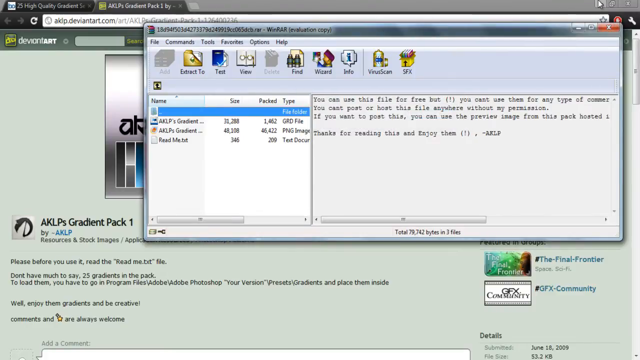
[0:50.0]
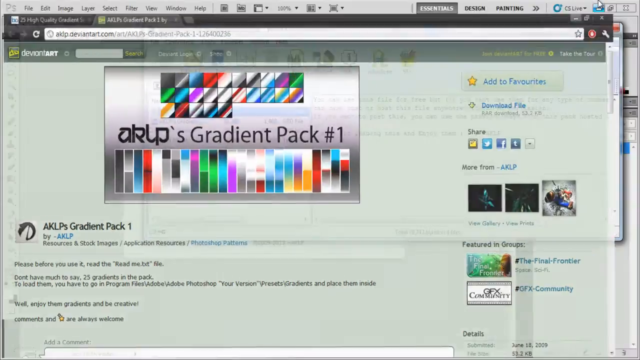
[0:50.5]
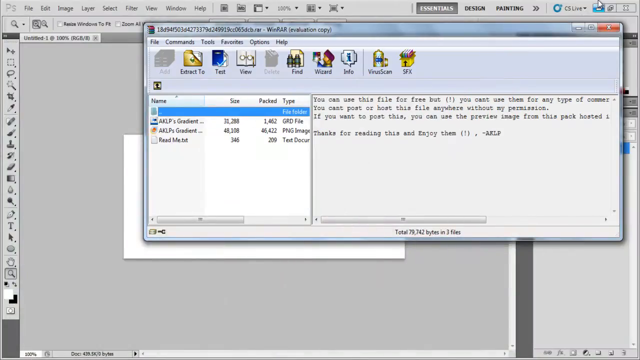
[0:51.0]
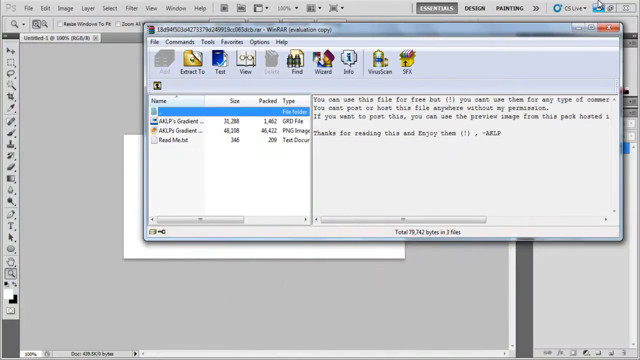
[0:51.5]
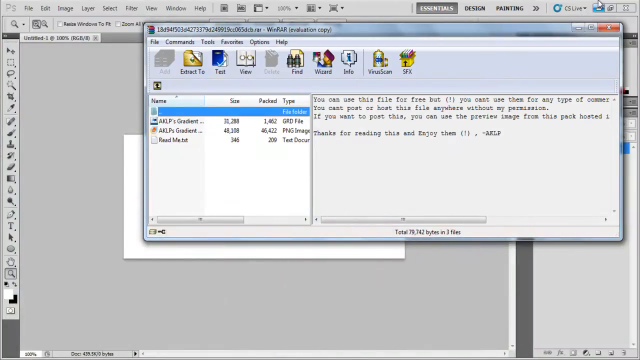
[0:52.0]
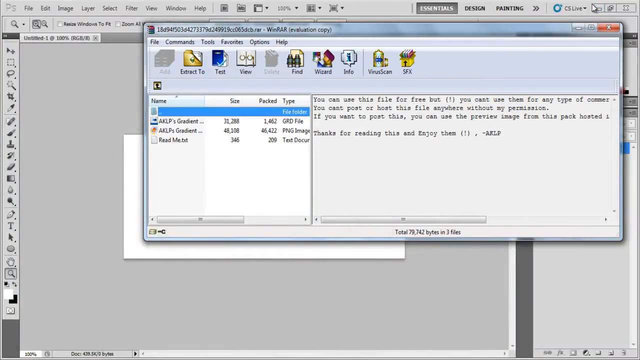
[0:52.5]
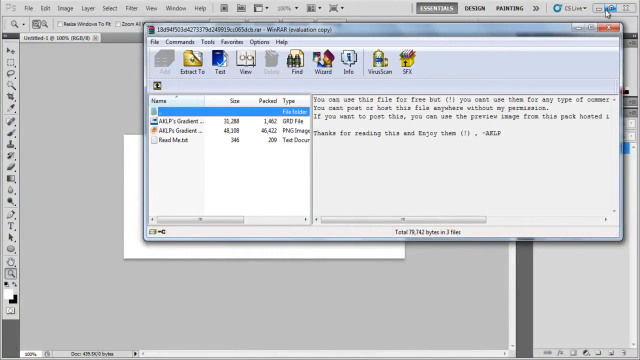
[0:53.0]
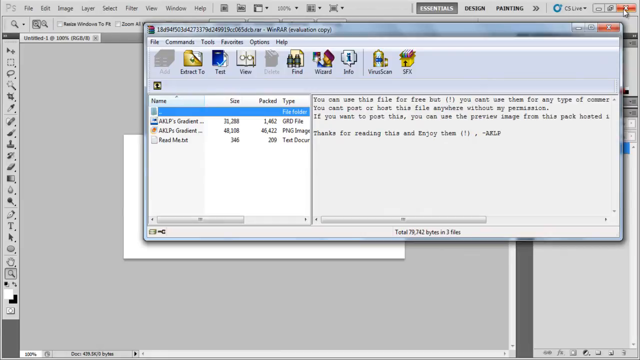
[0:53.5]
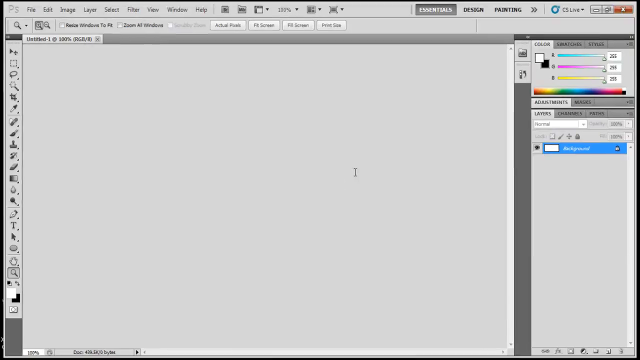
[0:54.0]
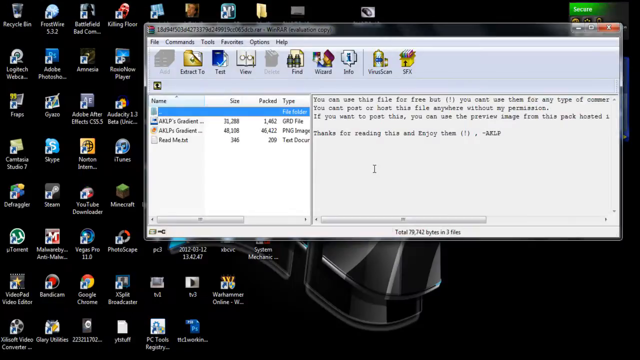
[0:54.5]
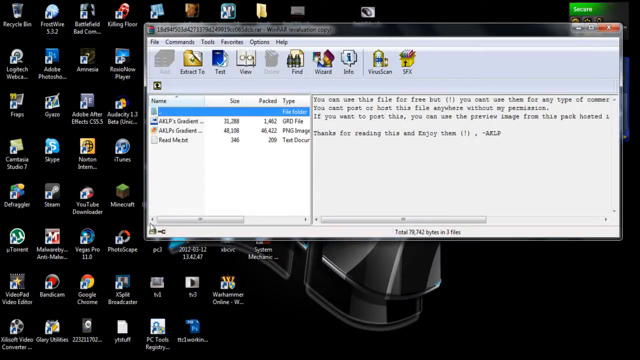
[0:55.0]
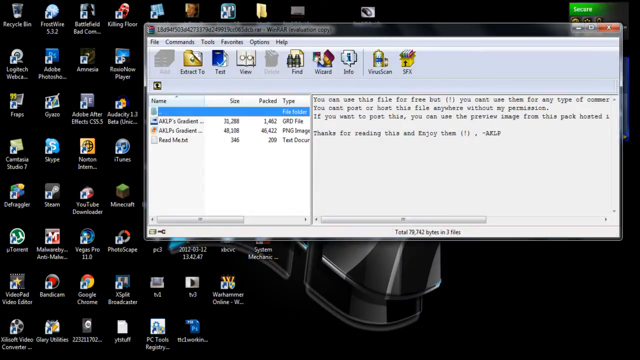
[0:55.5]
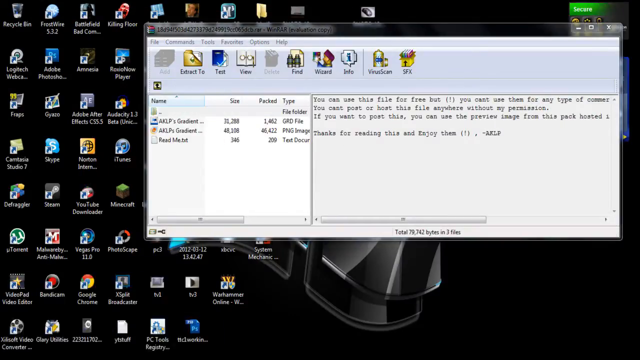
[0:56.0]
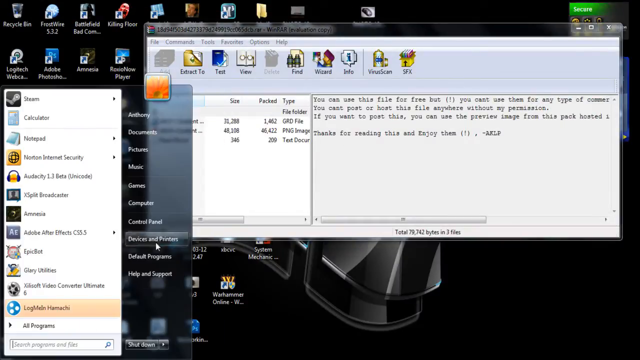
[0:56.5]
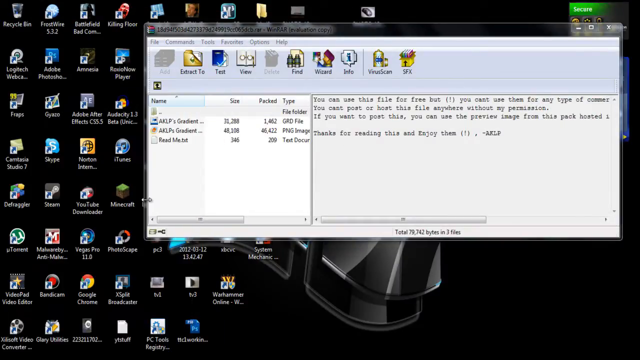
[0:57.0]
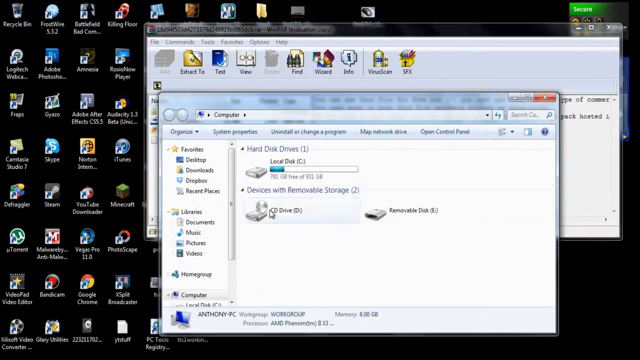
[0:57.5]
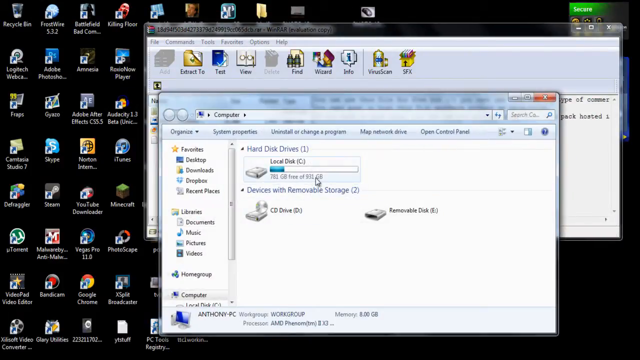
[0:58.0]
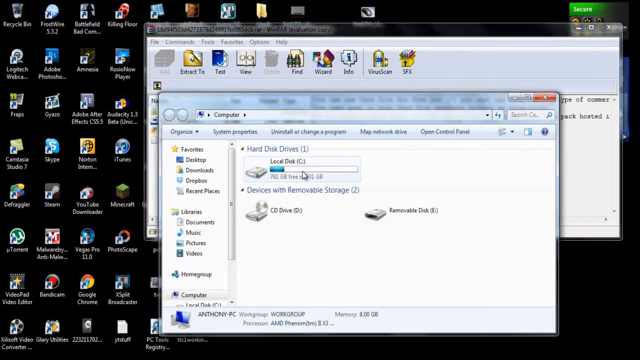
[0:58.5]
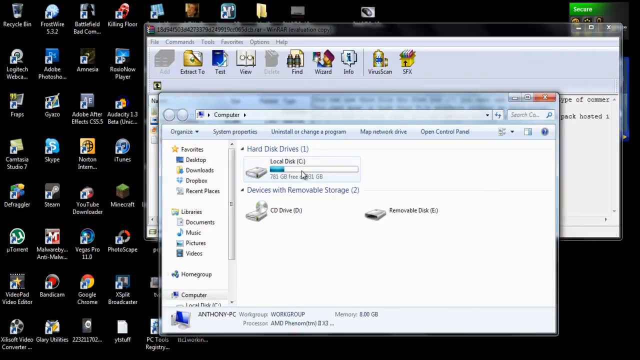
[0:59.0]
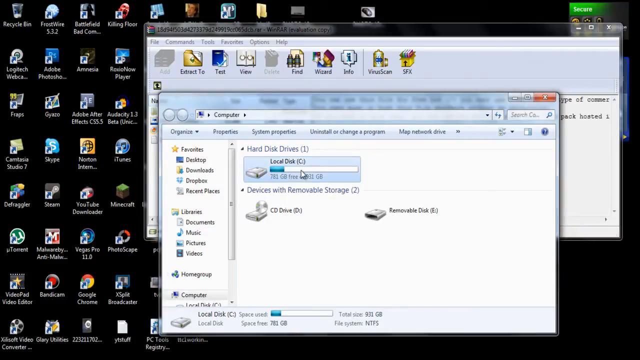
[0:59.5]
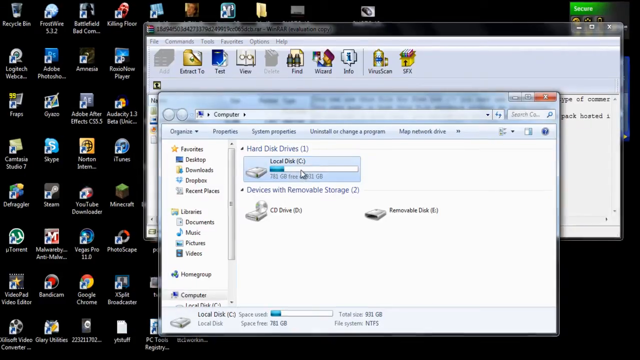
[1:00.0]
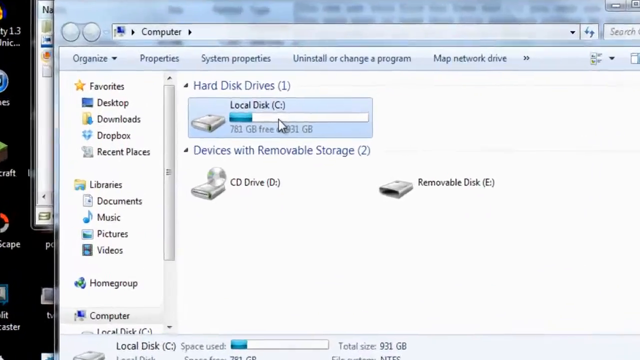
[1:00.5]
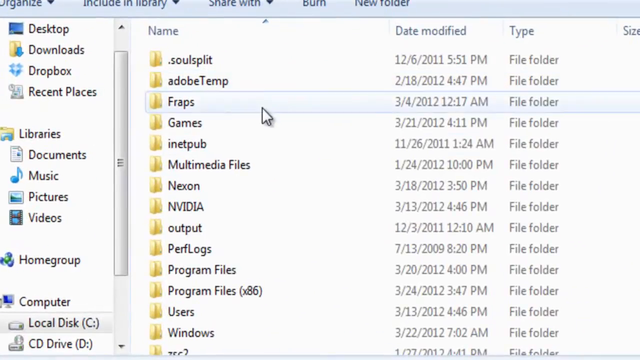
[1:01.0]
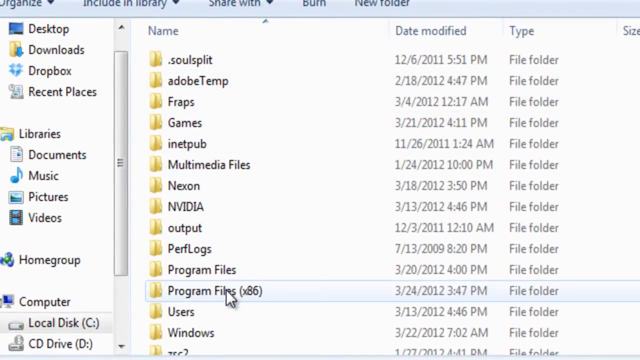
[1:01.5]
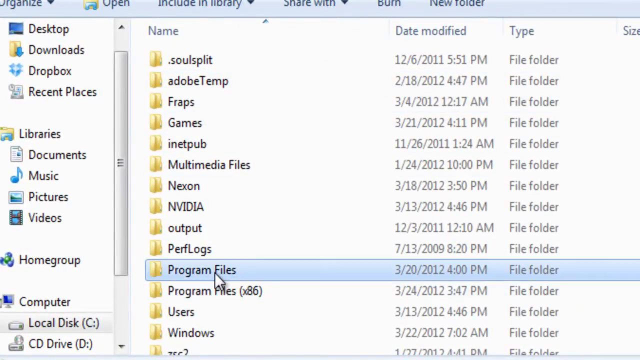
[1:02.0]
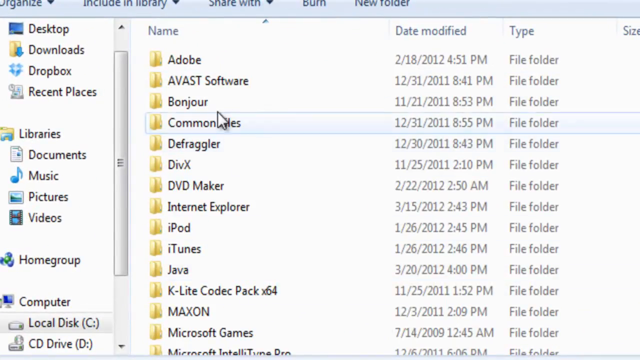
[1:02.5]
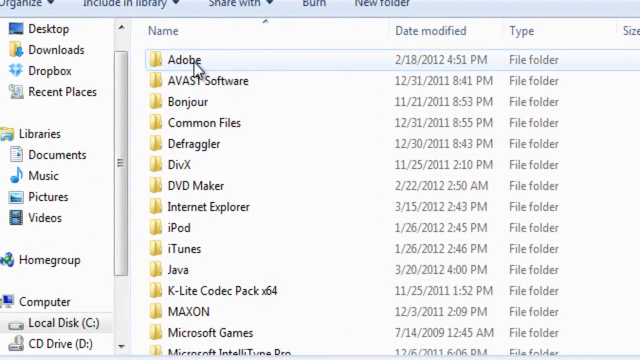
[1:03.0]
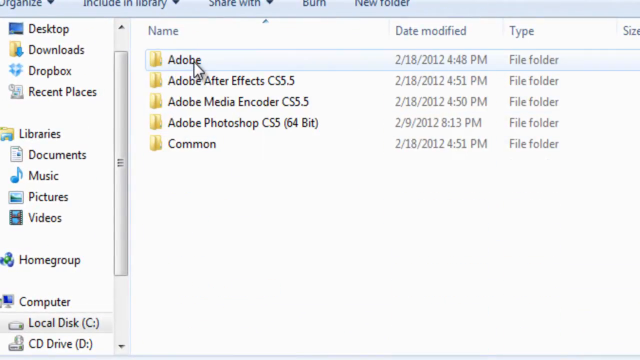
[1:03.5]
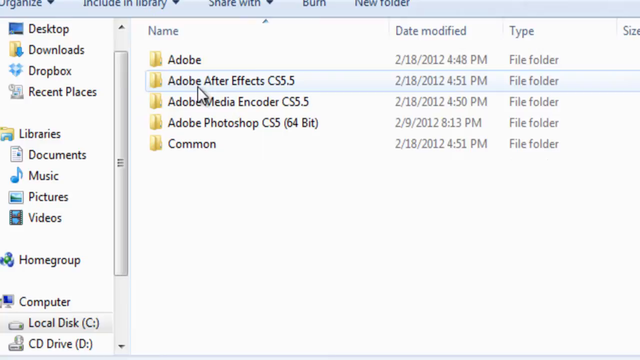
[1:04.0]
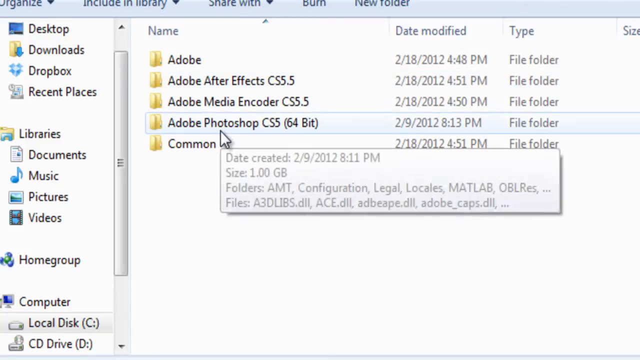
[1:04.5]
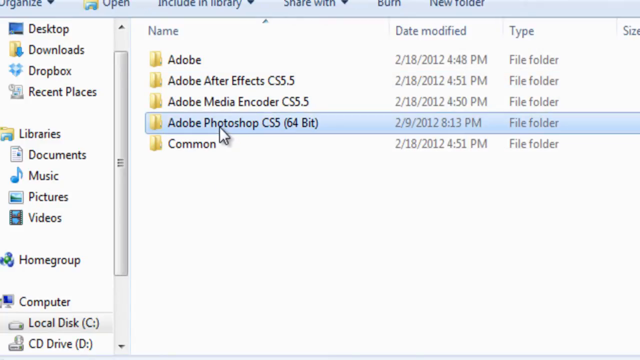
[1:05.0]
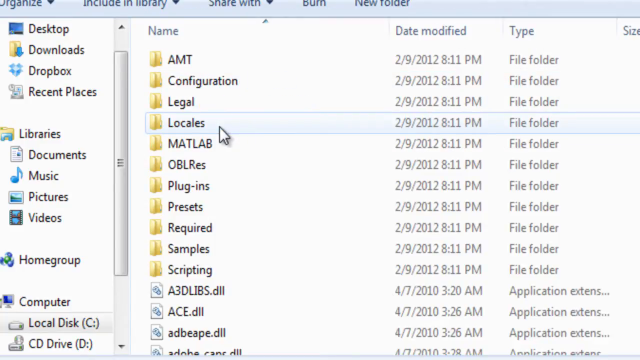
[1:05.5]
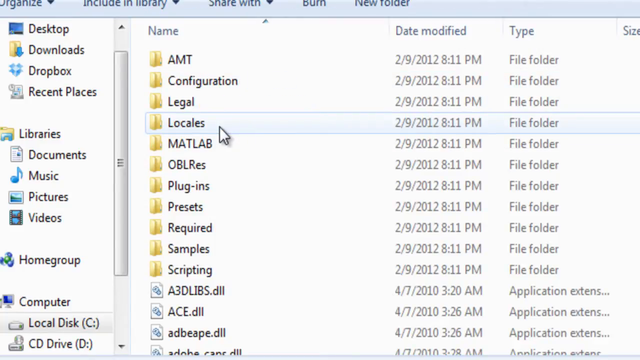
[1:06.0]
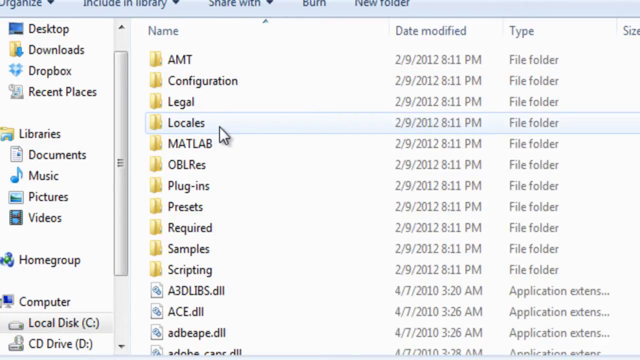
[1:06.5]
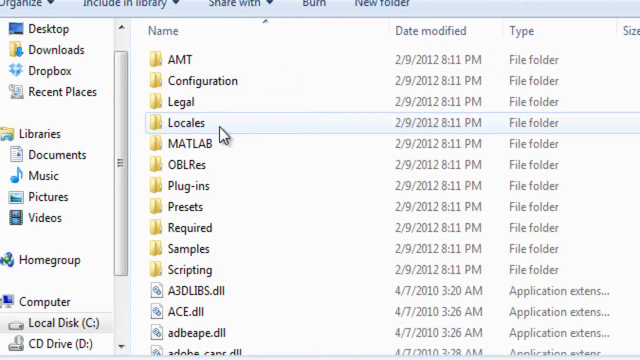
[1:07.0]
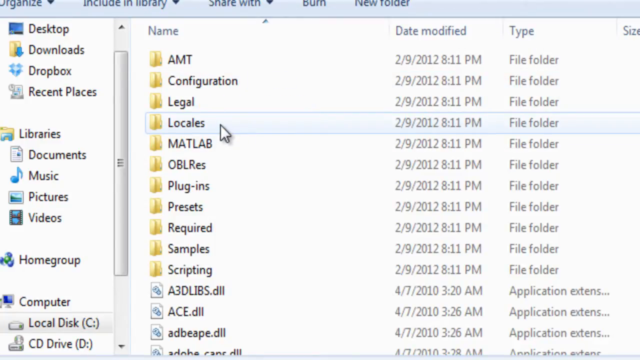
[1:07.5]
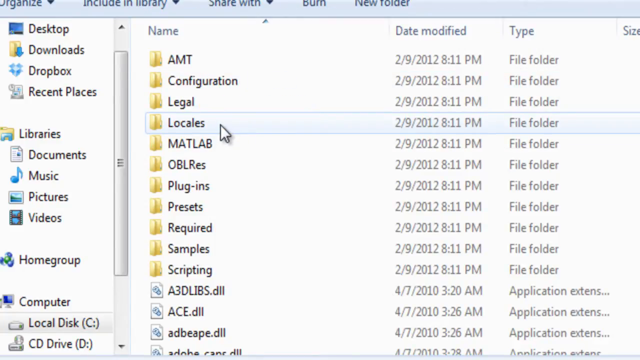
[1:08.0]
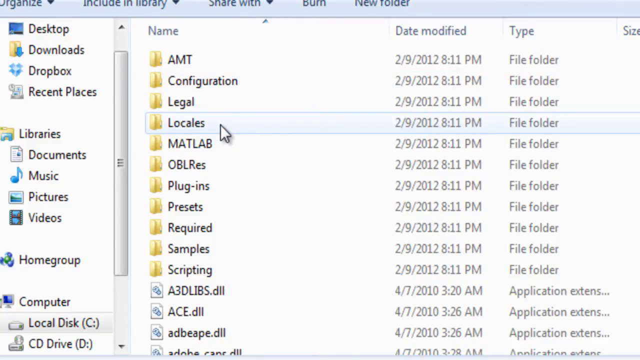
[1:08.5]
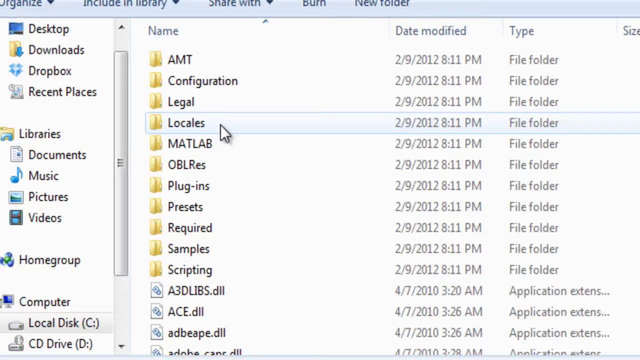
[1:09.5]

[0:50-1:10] A window for a Photoshop gradient is being opened, and a file is seemingly being opened through the Windows search bar or Windows home button. The mouse clicks on the computer and a new window opens, exposing the rest of the home desktop, which has different folders and a black background, while the other window, opened from the gradients on the web page, is also open. Local Disk is accessed, then Program Files, then Adobe, then Adobe Photoshop.